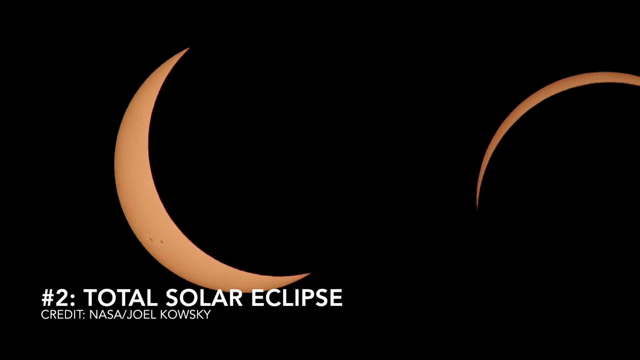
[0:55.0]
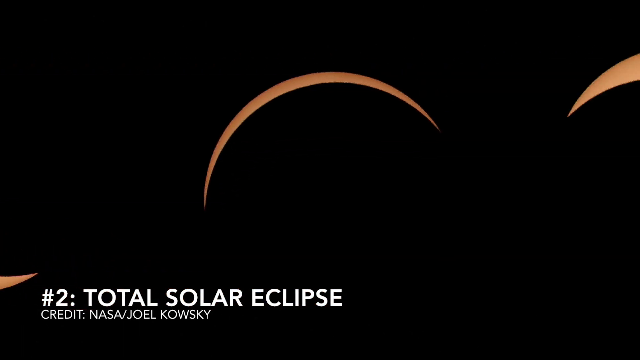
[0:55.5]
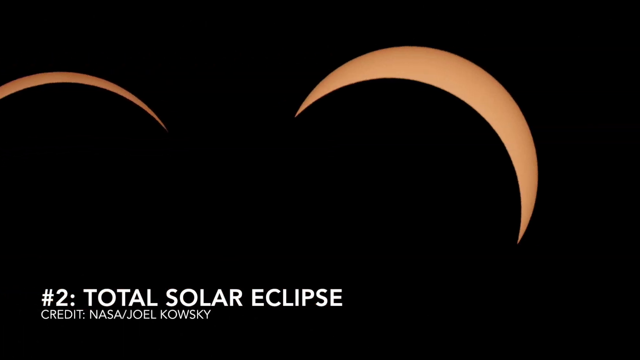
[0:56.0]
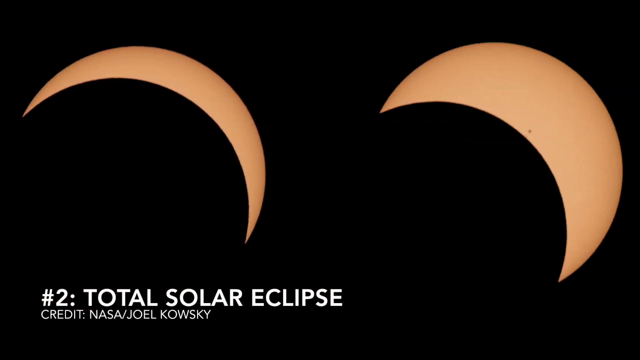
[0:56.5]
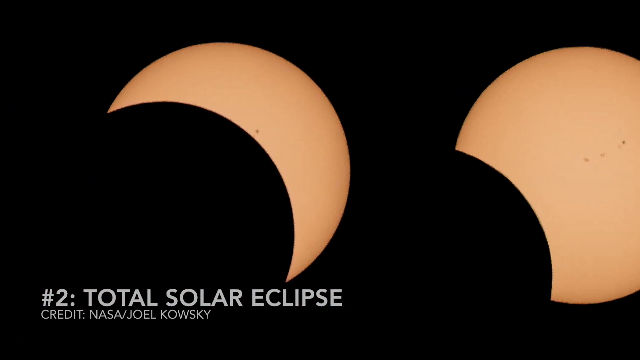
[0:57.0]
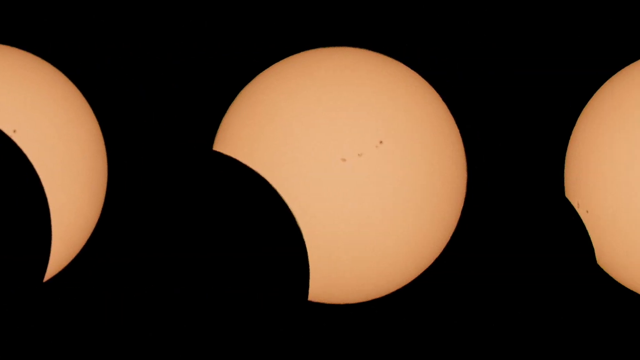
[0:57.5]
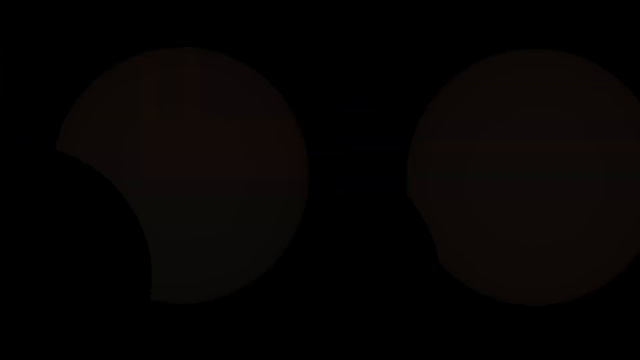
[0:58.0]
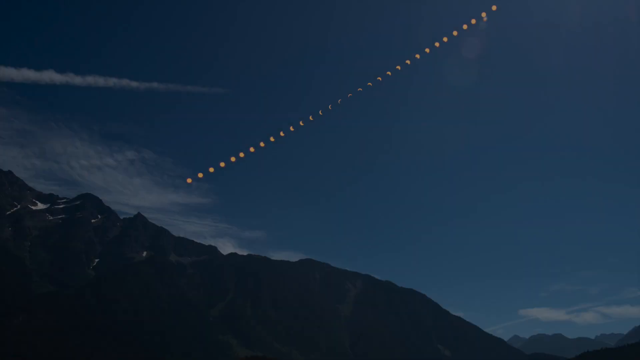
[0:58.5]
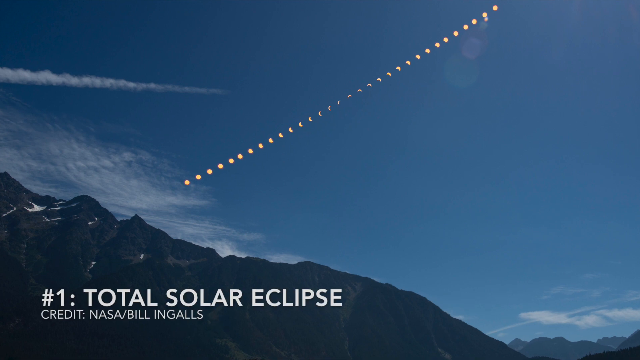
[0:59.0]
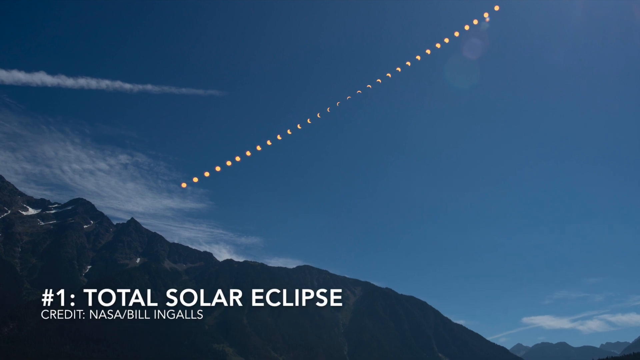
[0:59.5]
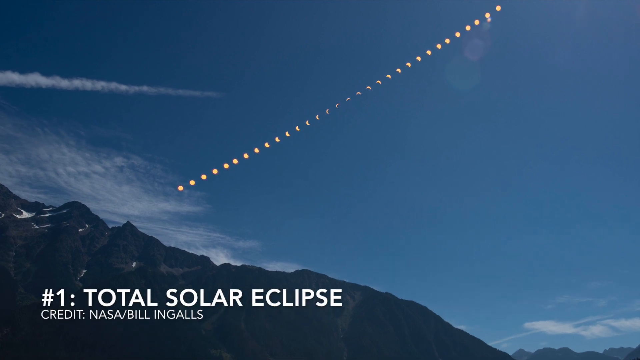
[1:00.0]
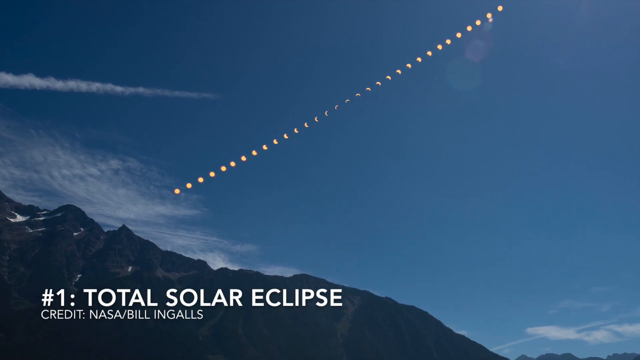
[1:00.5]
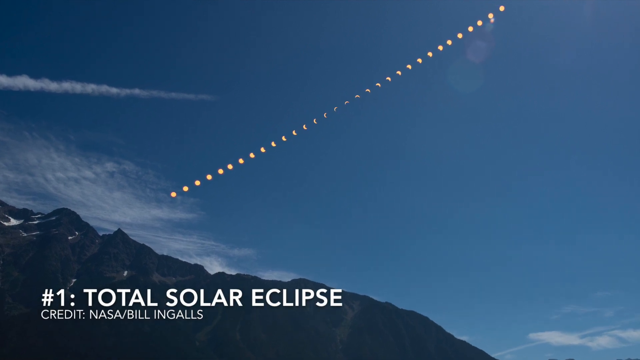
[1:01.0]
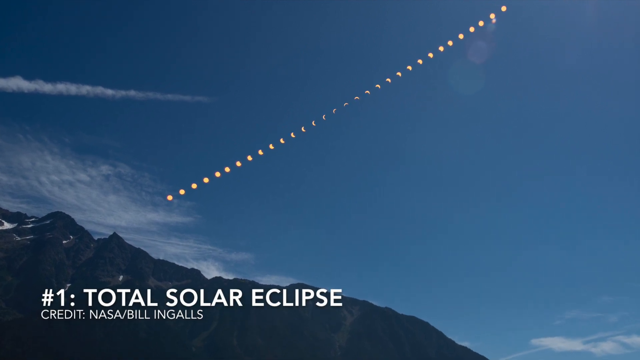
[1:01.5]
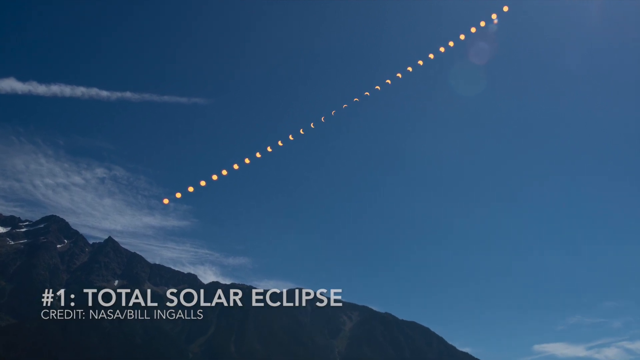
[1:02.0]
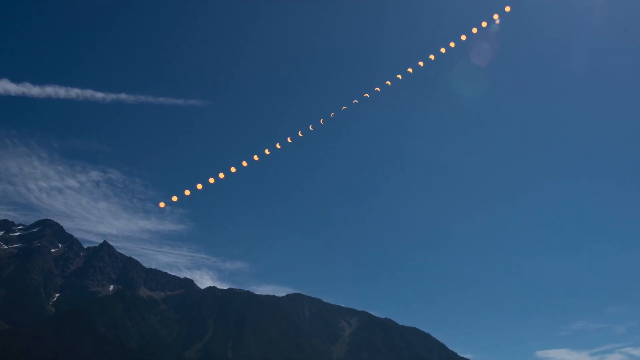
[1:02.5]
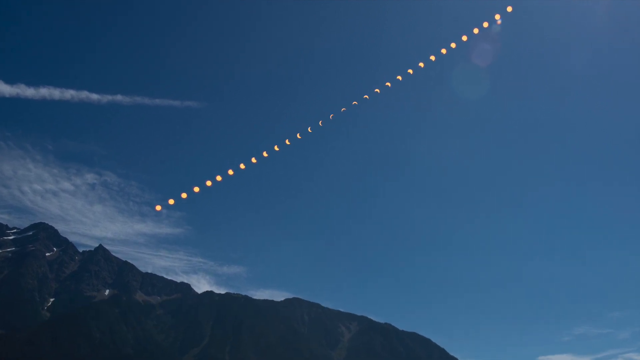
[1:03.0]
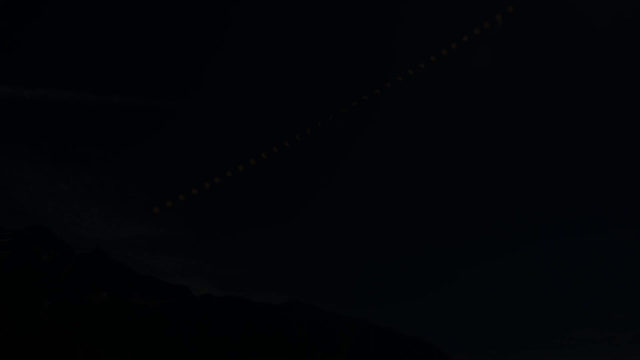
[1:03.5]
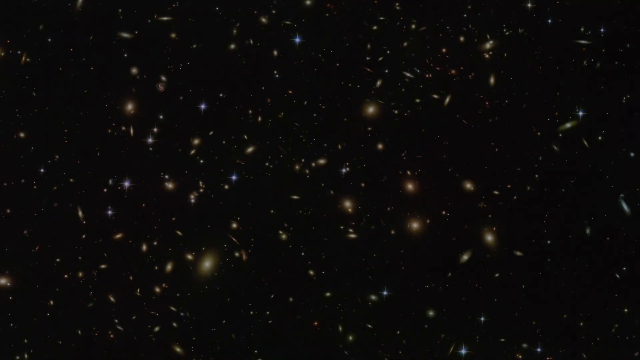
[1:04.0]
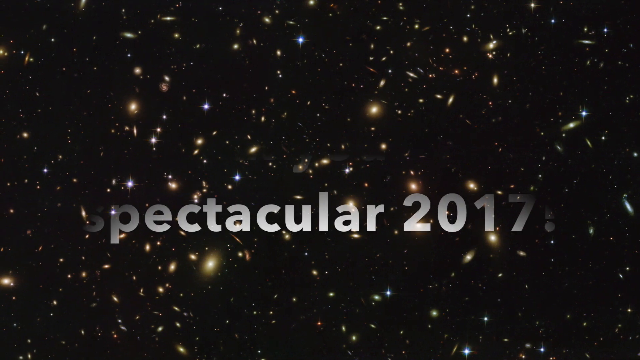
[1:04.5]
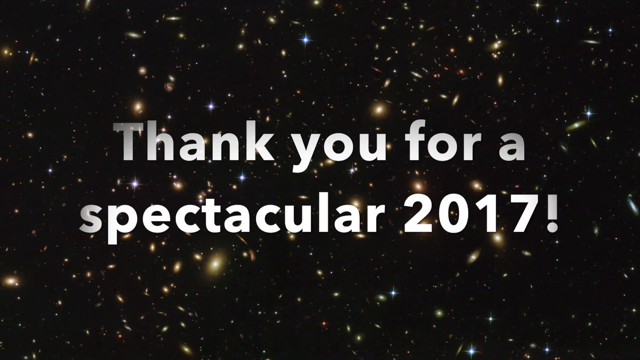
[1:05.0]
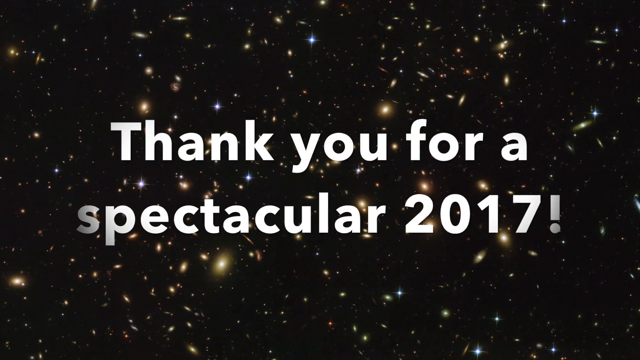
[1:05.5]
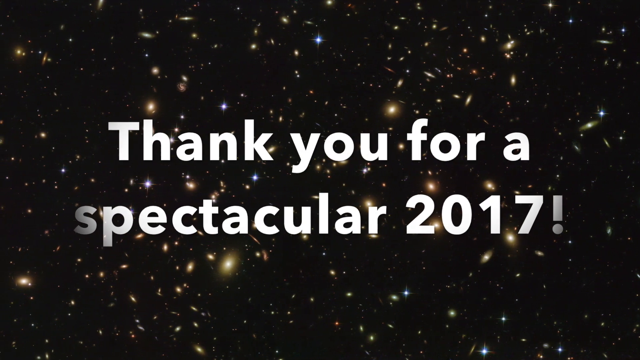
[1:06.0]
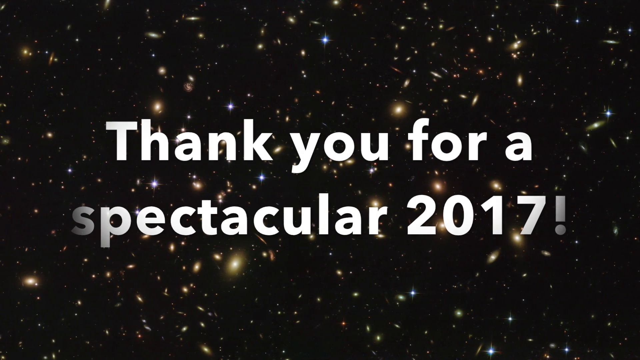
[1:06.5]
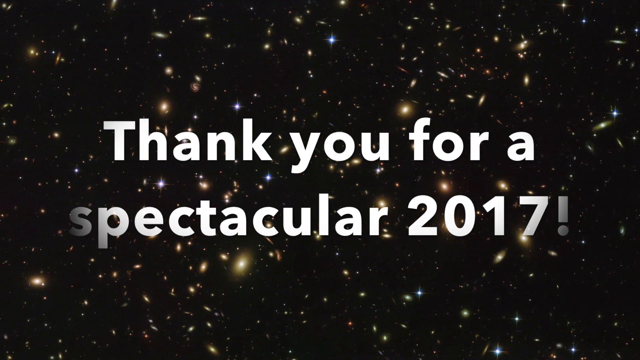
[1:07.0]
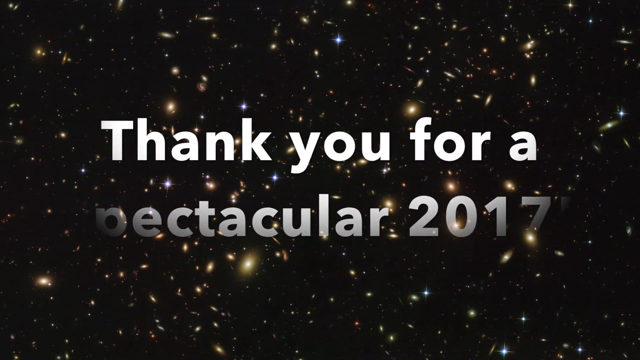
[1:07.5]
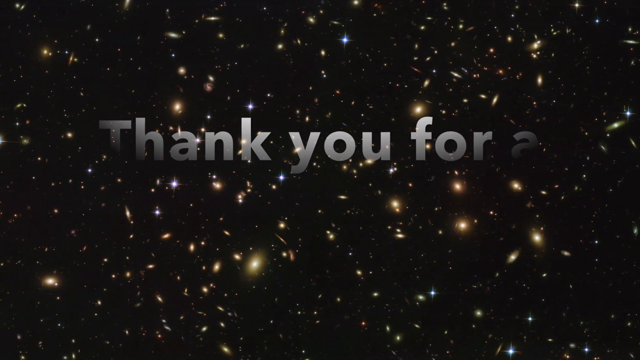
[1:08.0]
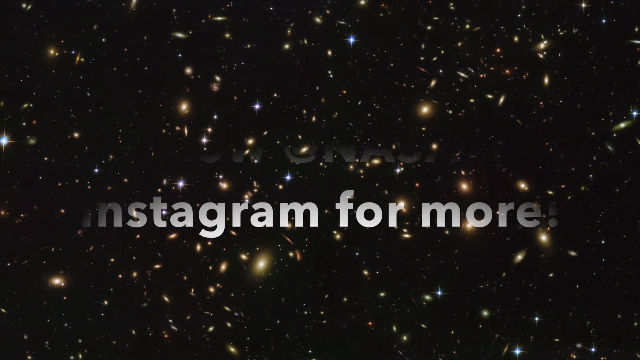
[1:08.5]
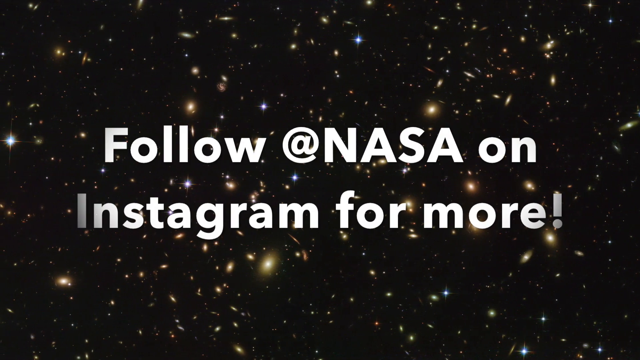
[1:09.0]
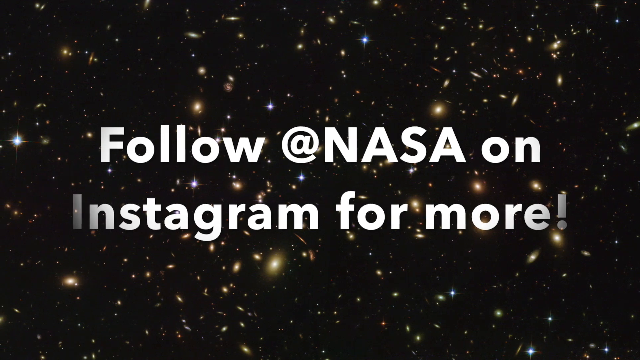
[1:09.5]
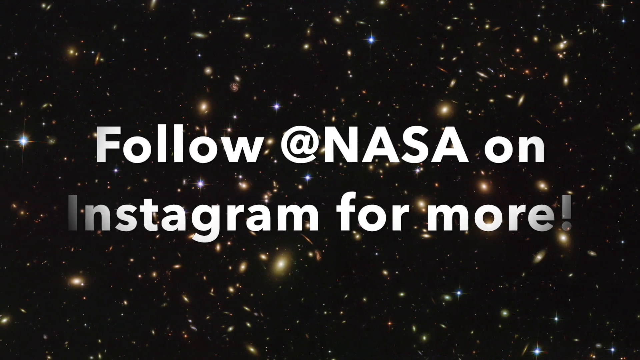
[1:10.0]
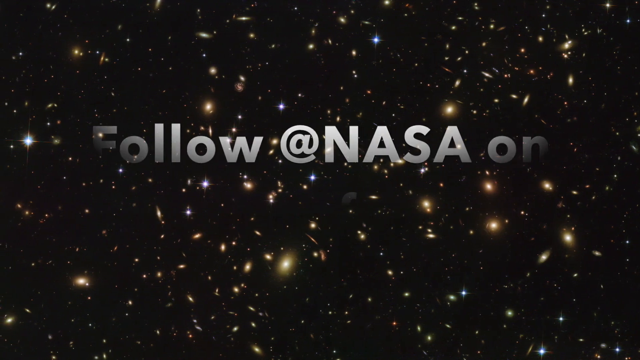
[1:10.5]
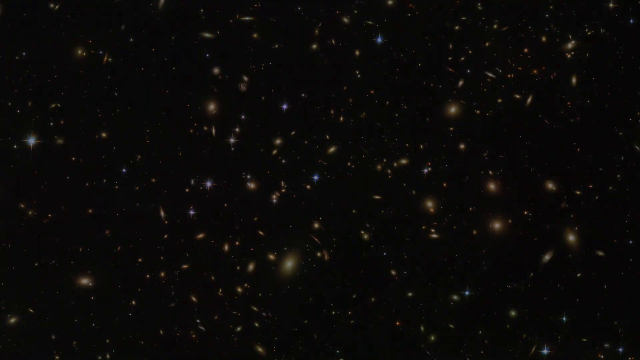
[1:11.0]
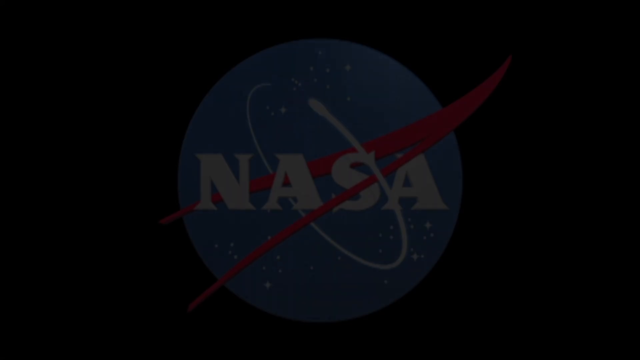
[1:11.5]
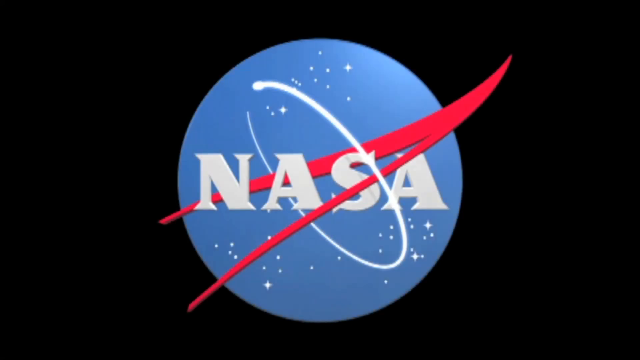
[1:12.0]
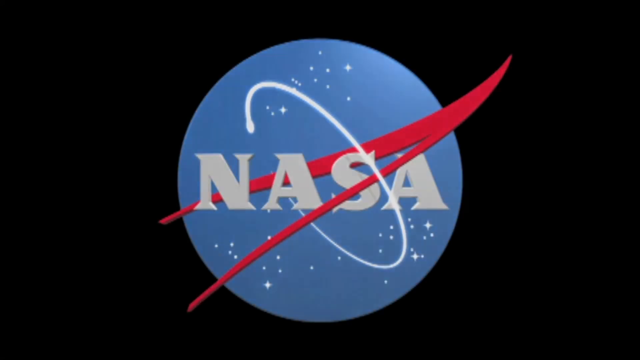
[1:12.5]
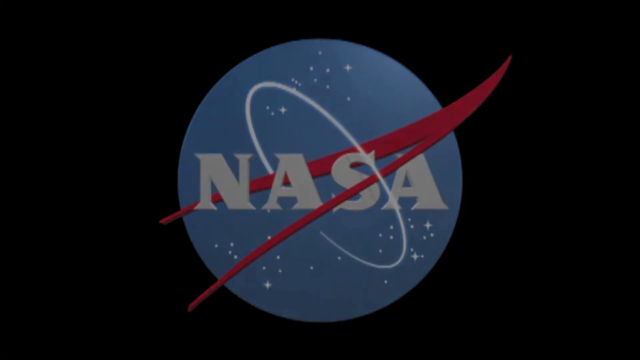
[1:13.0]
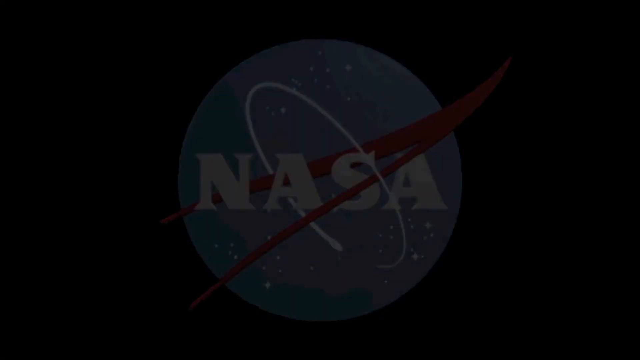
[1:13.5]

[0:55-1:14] Number two, "total solar eclipse", shows several images of the eclipse from start to finish: a peach background with a white shadow coming over it, less and less. Number one, "total solar eclipse", shows a shape somewhat like a mountain in the left corner, a dark blue sky, and a line of images of the eclipse, somewhat like a time lapse with each image put together on one screen; at each end is the full moon, and in the center the full eclipse. The next screen has the black background with blue and yellow stars, and on top in white it says "thank you for a spectacular 2017. Follow at NASA on Instagram for more." Finally, a blue circle with red and white marks appears, with NASA in the middle.